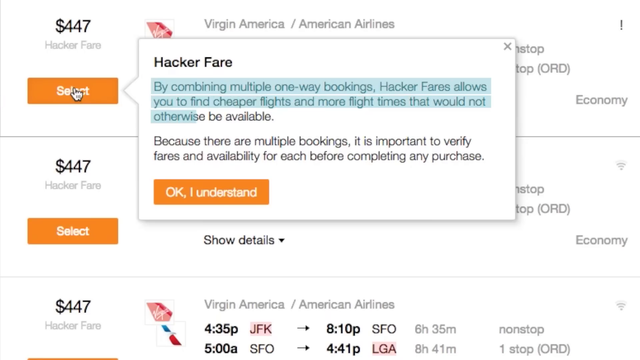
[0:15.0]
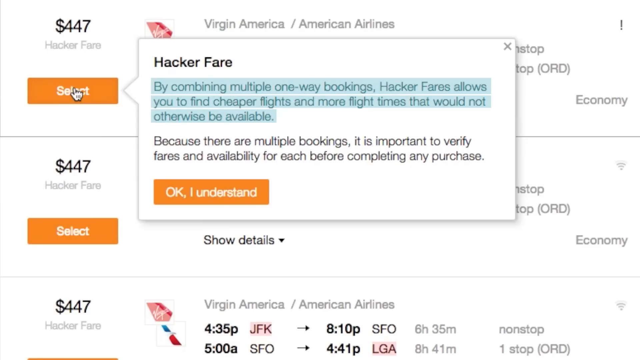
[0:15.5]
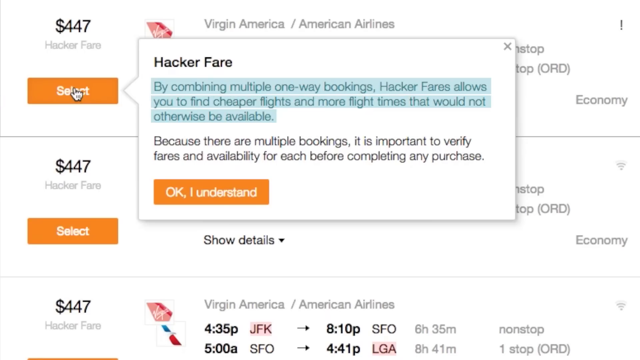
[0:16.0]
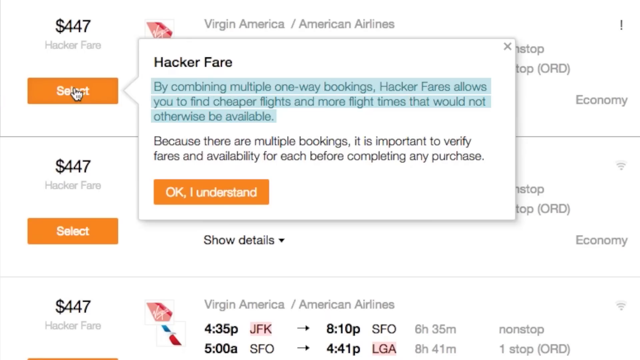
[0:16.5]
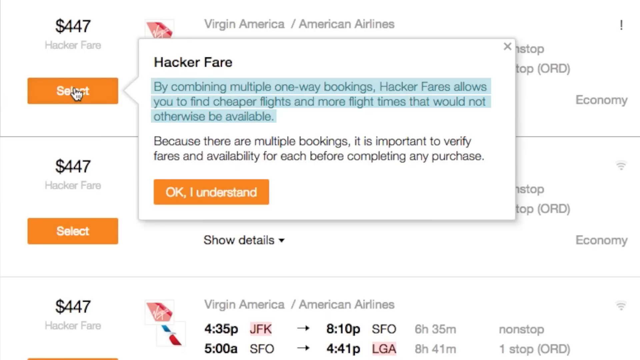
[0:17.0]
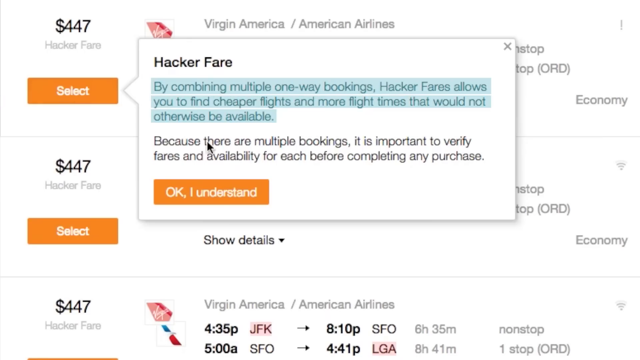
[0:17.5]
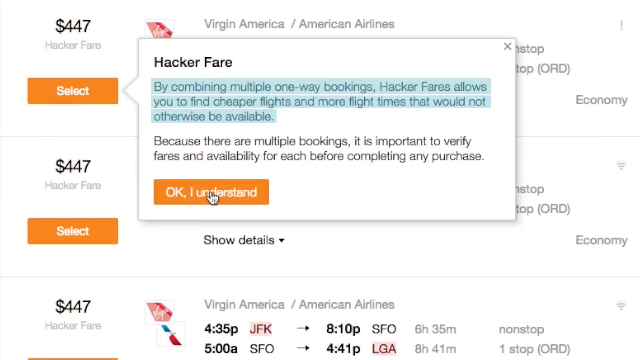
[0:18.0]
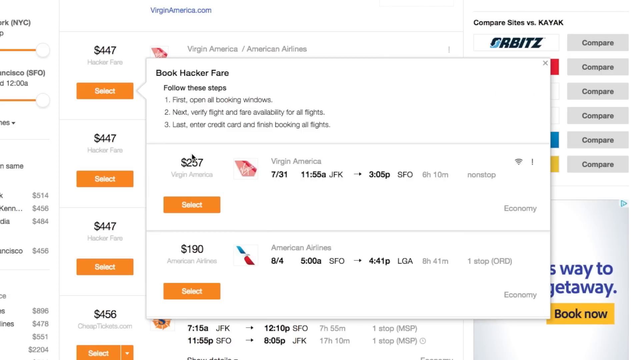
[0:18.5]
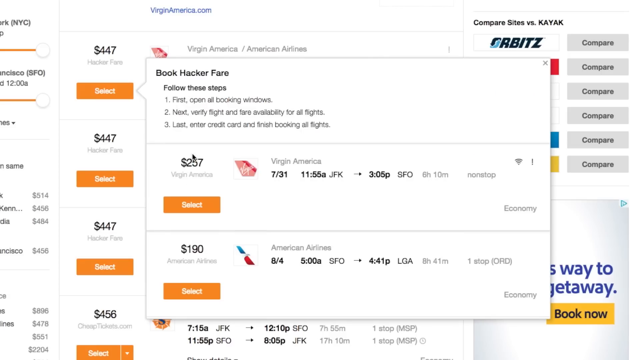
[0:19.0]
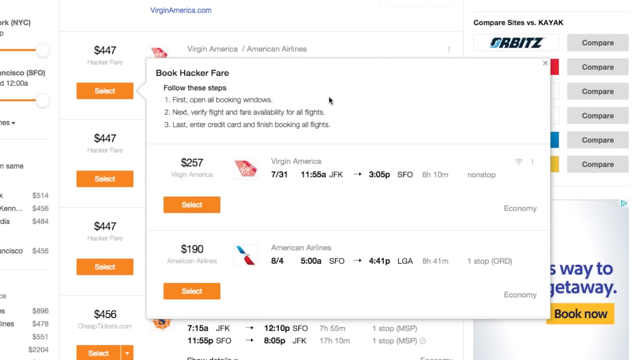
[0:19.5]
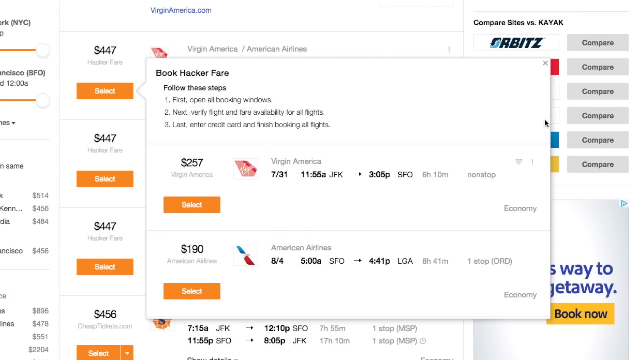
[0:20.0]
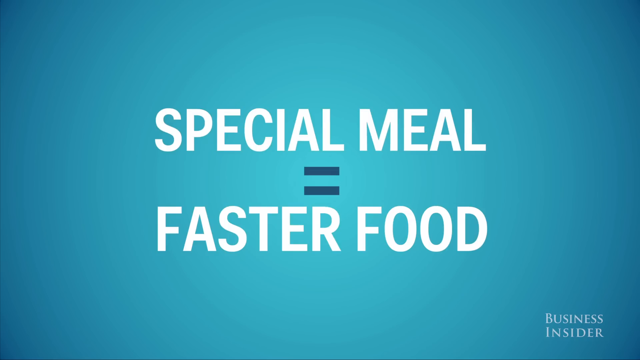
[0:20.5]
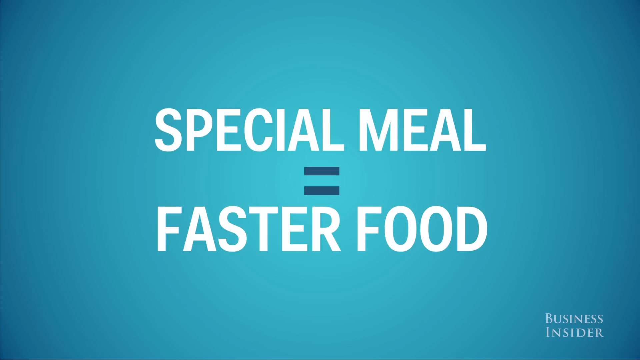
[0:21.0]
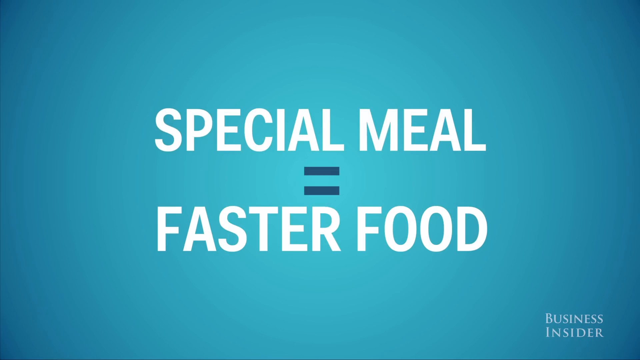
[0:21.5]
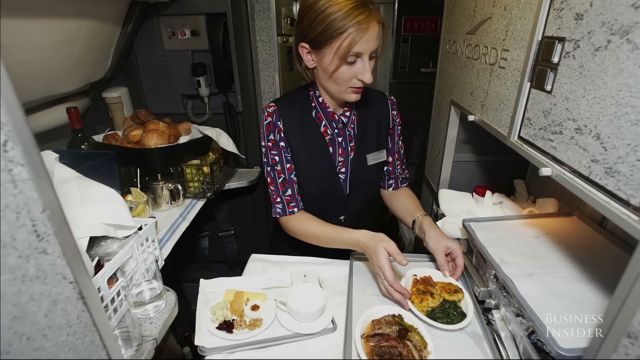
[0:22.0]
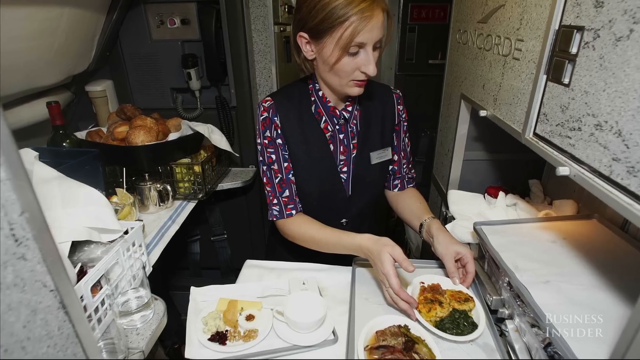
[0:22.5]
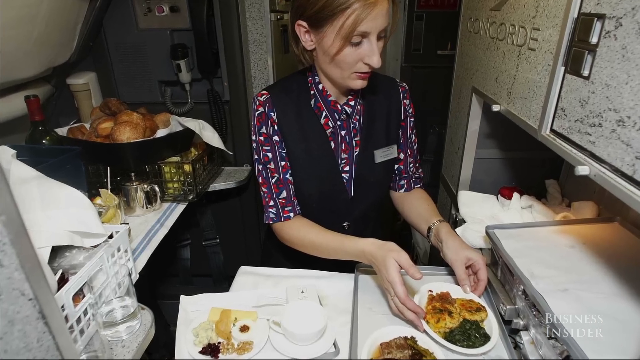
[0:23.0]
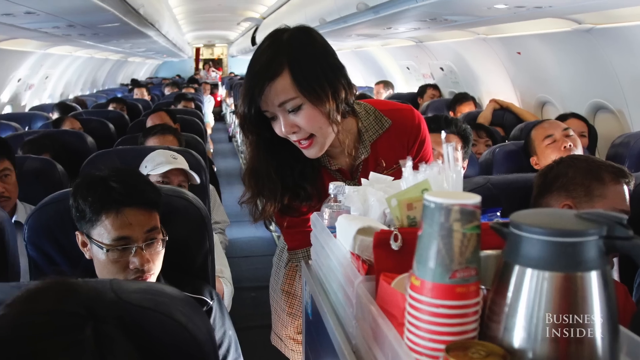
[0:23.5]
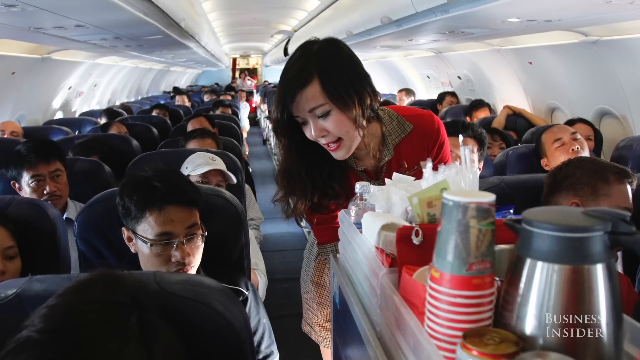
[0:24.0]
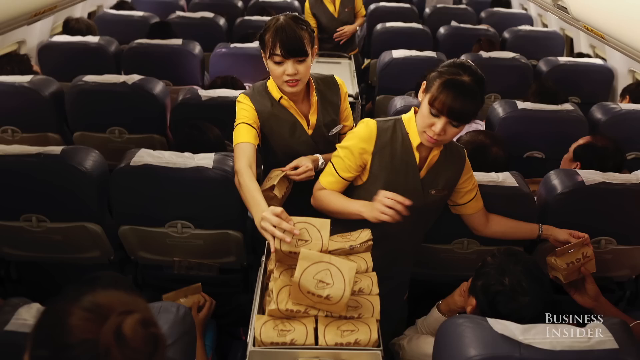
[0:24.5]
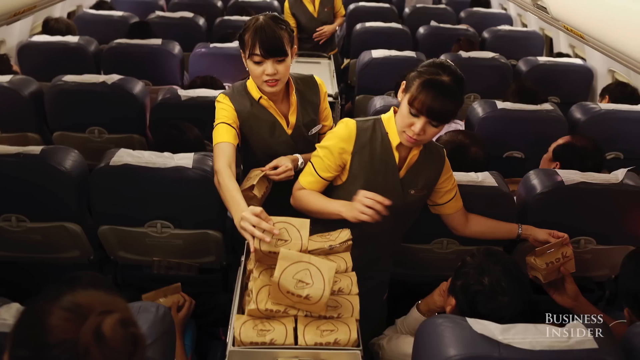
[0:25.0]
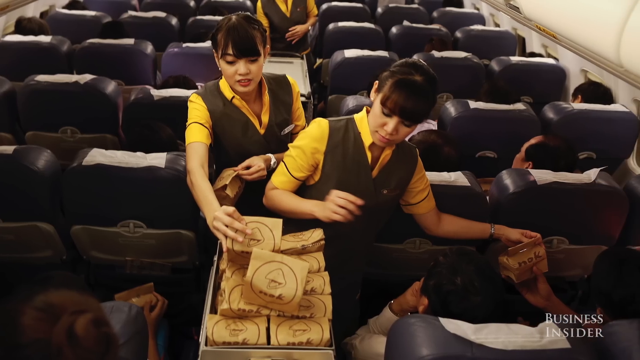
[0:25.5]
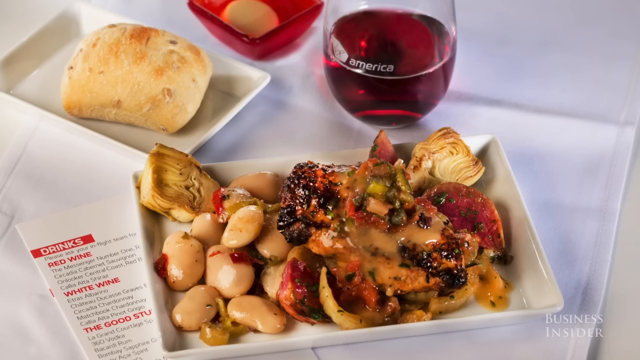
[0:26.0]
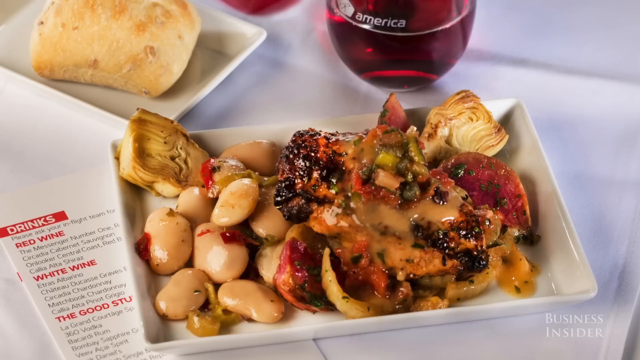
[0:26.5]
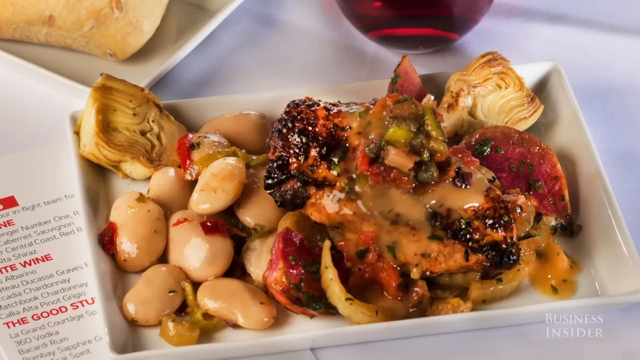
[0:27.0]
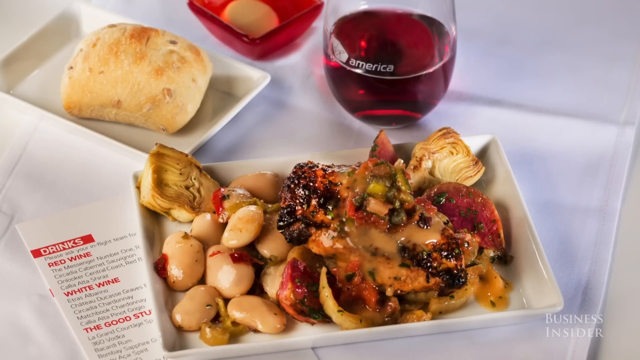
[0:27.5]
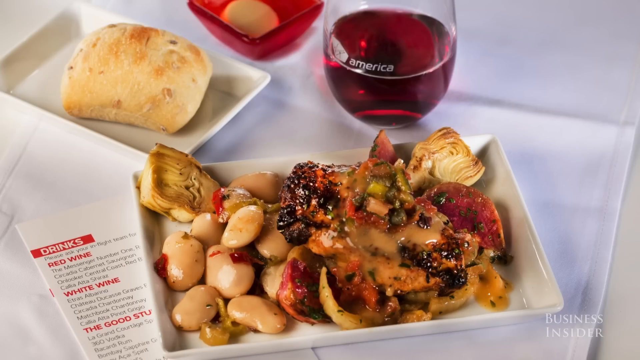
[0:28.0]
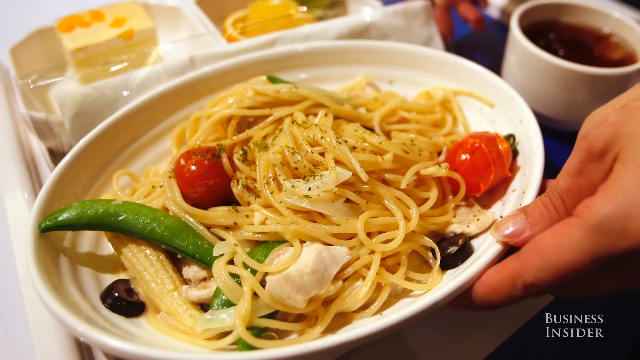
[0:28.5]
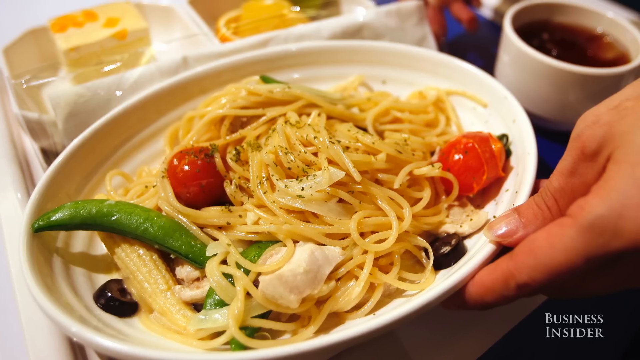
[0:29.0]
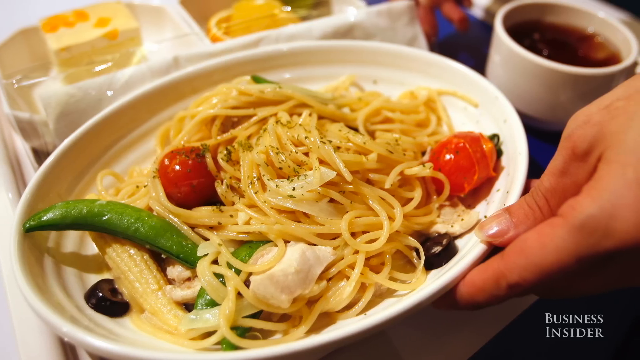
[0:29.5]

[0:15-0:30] Text reads "eight awesome travel hacks" and "hacker fare," and a screen shows "okay, I understand." Video shows "special meal equals faster food" with Orbits. A woman leans over talking, and three women are on an airplane. A picture shows wine, bread, pasta and vegetables. "Fares" and "447 select" appear. A woman prepares food, and a woman talks to a passenger on an airplane. Three women stand in an airplane aisle, and a hand holds food. A woman who is a flight attendant appears. A picture shows food with beans, pasta, carrots and tomatoes. "436 JFK" and "book hacker fare" appear on Orbits. A woman leans over, and a man talks to him; she wears a red shirt. A picture shows food with bread. A woman is in a galley, a man talks to a flight attendant, and three flight attendants hand out food. A hand holds coffee and food. A mouse moves over a screen. A woman and a flight attendant wearing a black vest appear, along with two flight attendants.